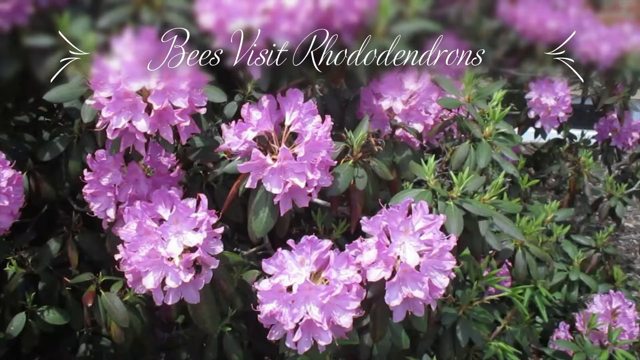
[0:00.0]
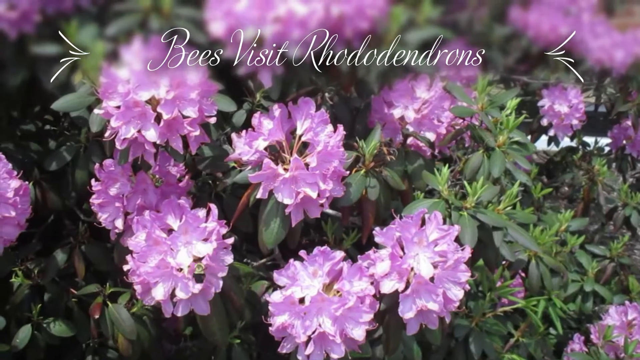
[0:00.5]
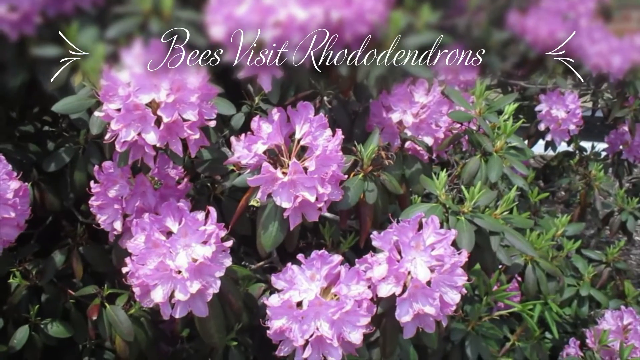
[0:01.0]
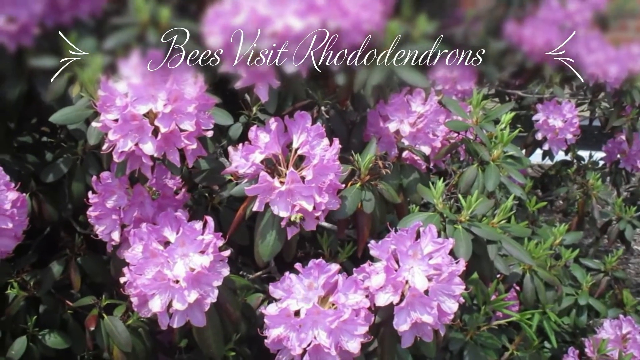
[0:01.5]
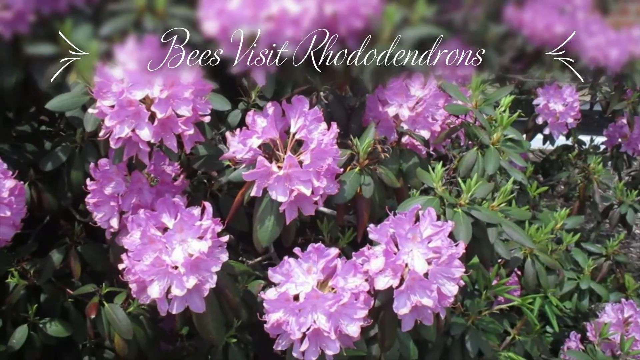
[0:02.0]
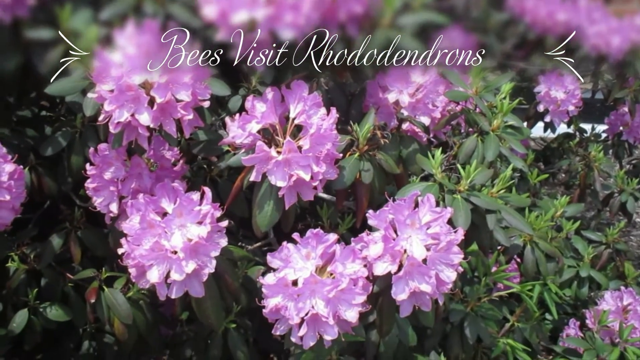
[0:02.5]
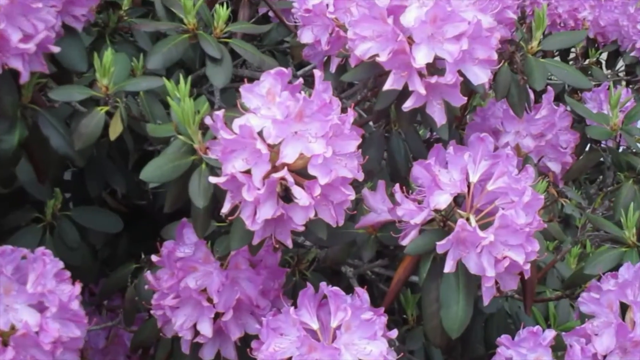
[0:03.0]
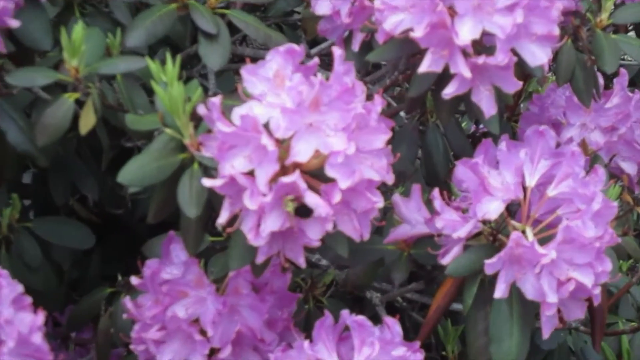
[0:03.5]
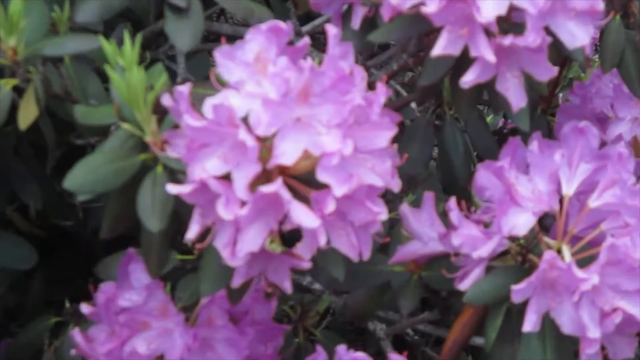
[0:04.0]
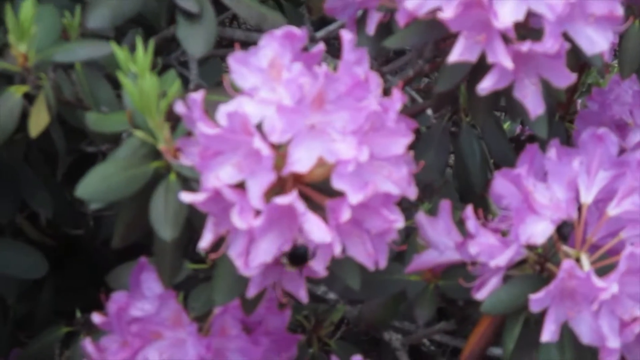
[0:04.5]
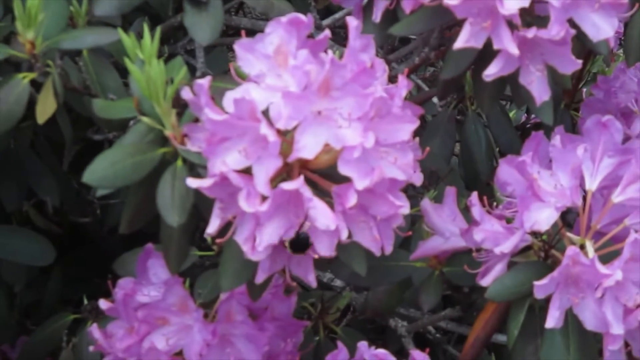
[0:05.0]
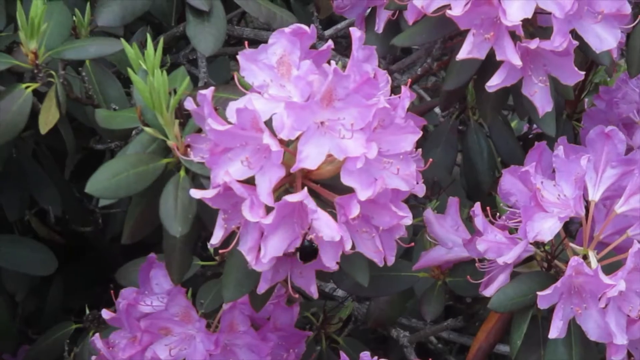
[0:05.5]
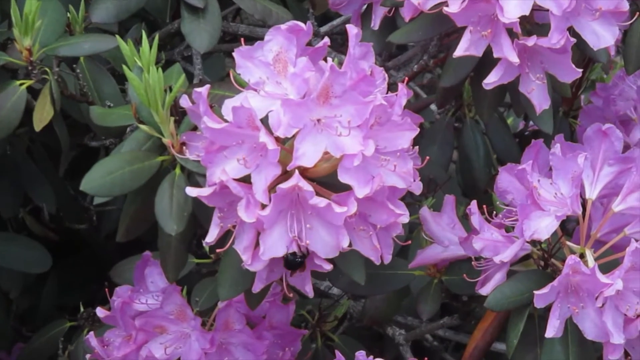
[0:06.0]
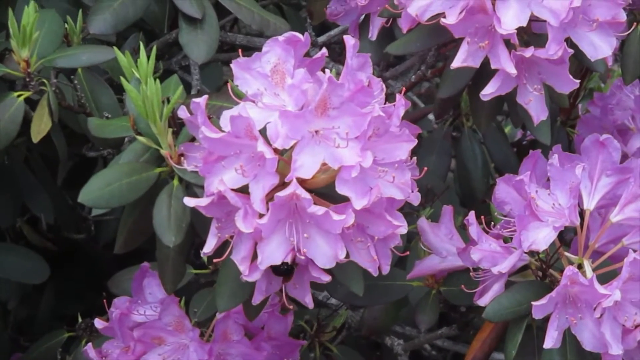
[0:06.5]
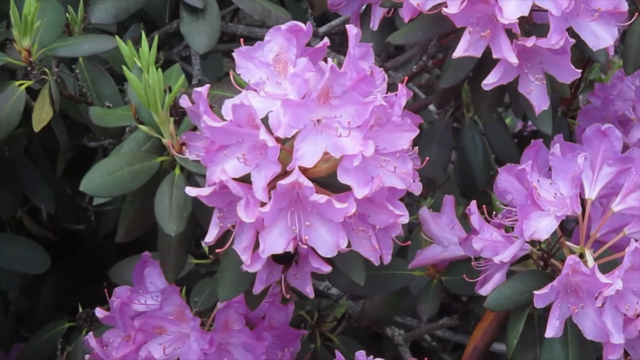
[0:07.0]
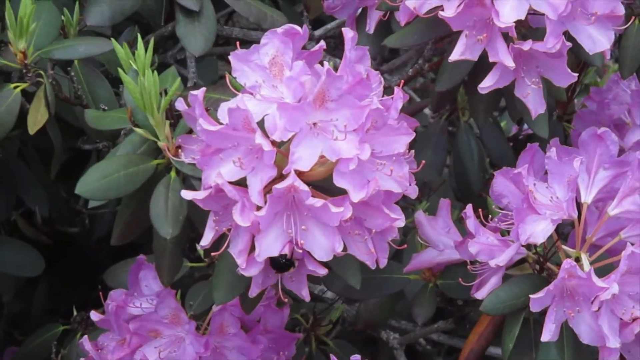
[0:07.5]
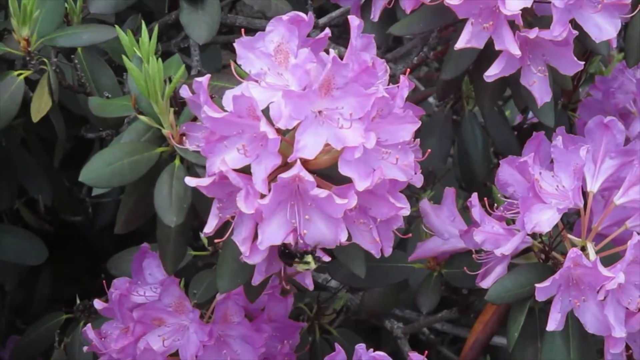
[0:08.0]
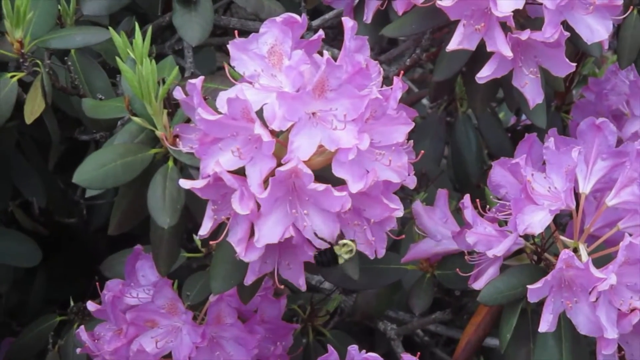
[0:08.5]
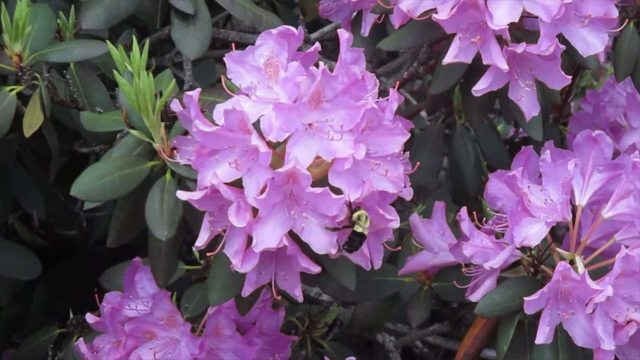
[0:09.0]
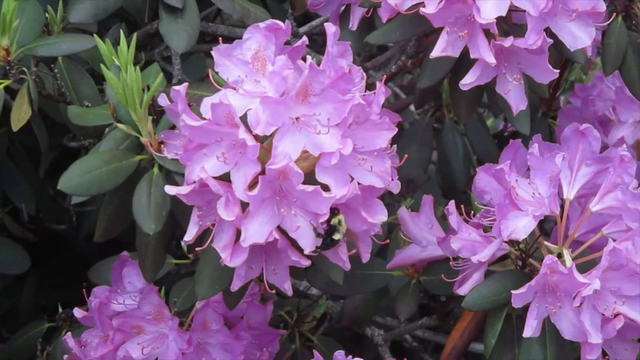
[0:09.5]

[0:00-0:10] The camera is zoomed in on some purple flowers, with bees visible at the center of some of them. A graphic at the top of the screen reads "Bees visit rhododendrons" in script, with decoration to the right and left of the text. The camera is handheld, and bees fly around. The opening establishing shot carries the title and shows about 10 flowers. The video then cuts to a closer shot zoomed in on a cluster of flowers, and finally zooms in and focuses on one purple flower, showing the detail of a bee crawling all around it.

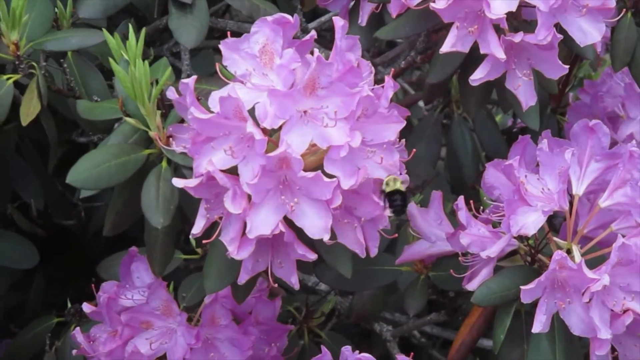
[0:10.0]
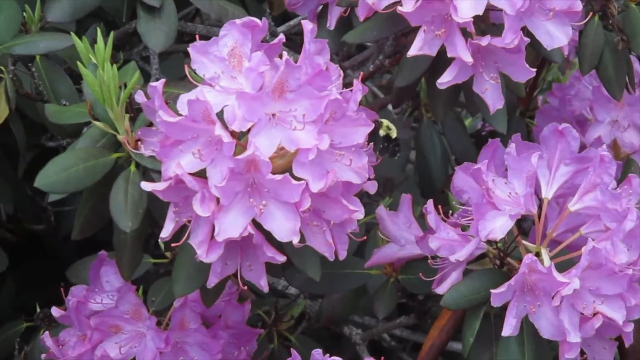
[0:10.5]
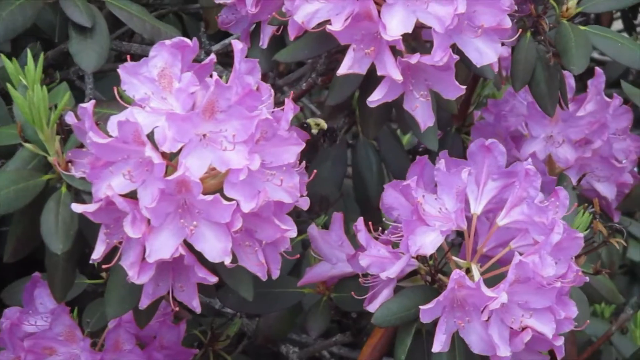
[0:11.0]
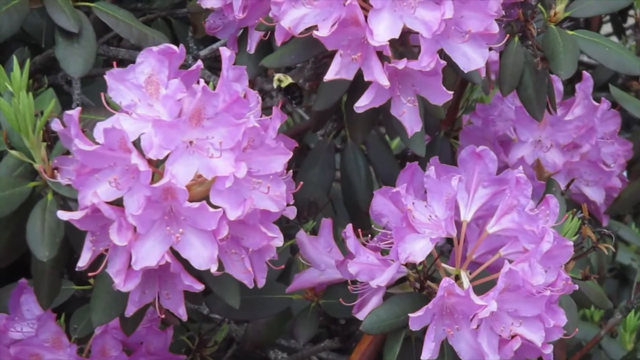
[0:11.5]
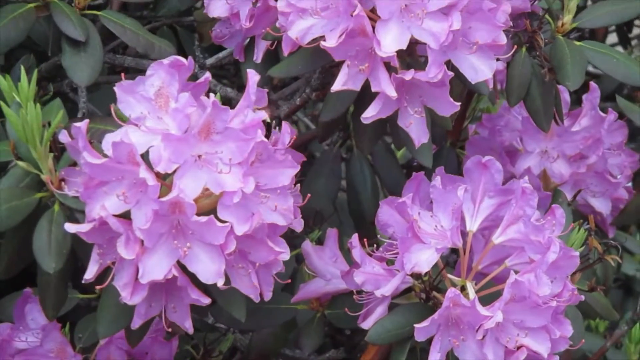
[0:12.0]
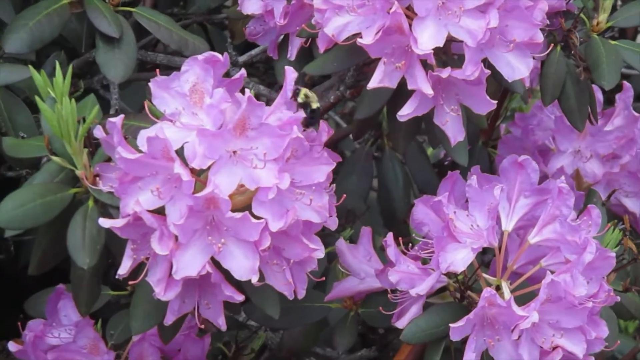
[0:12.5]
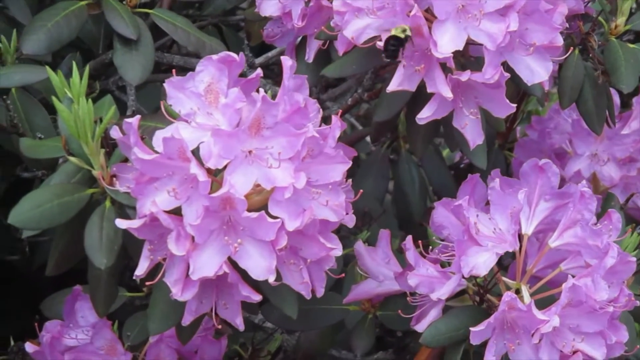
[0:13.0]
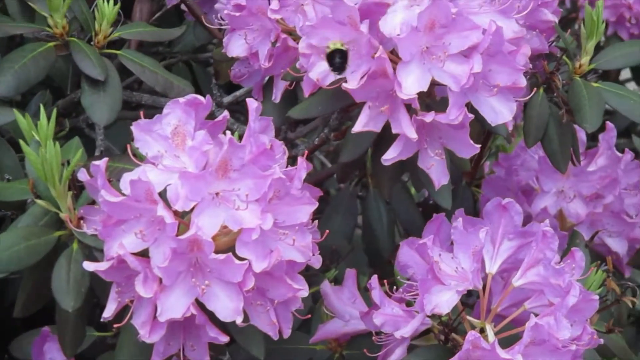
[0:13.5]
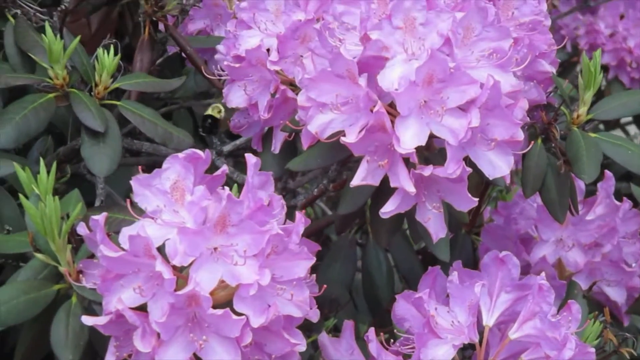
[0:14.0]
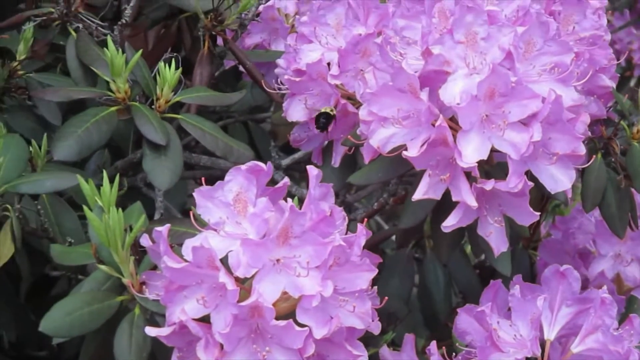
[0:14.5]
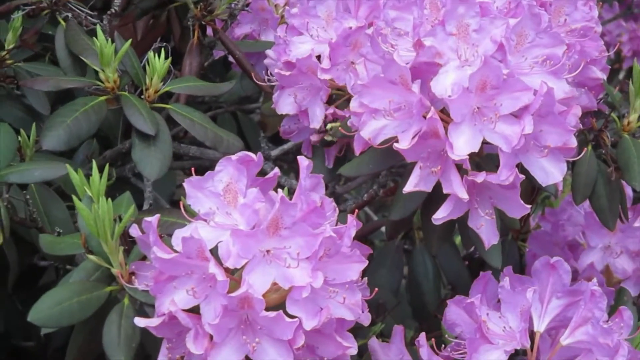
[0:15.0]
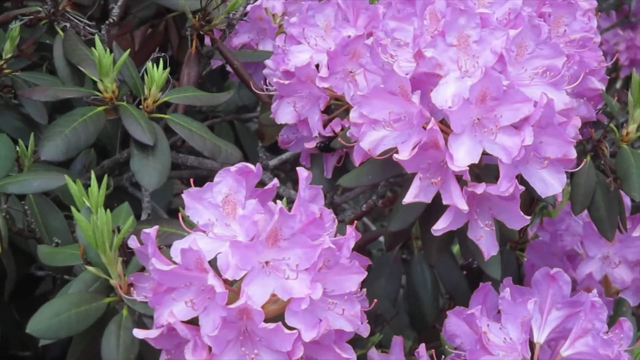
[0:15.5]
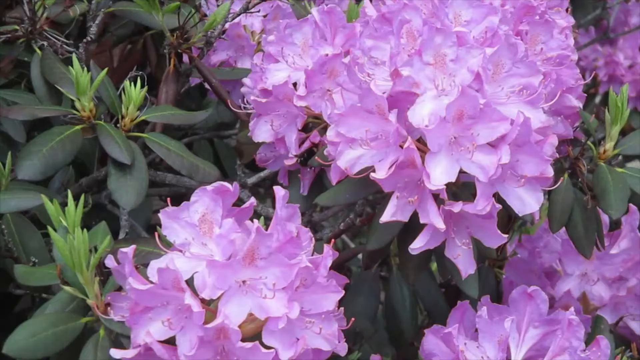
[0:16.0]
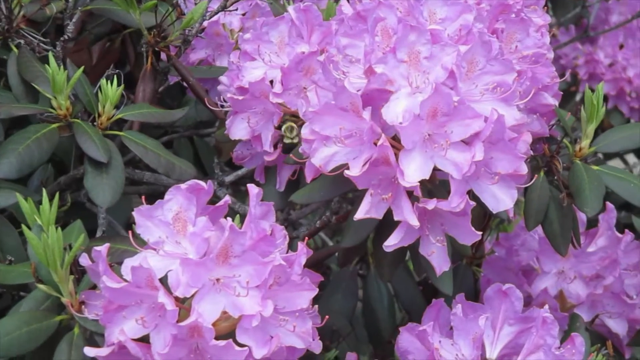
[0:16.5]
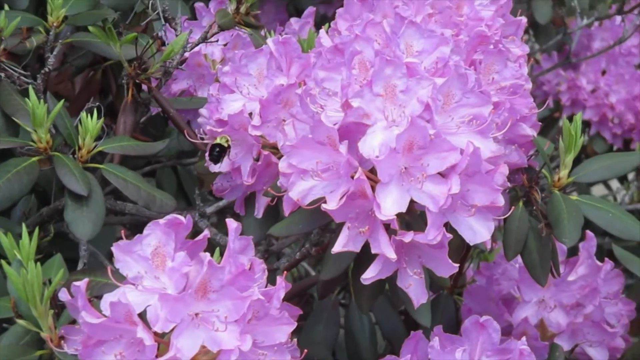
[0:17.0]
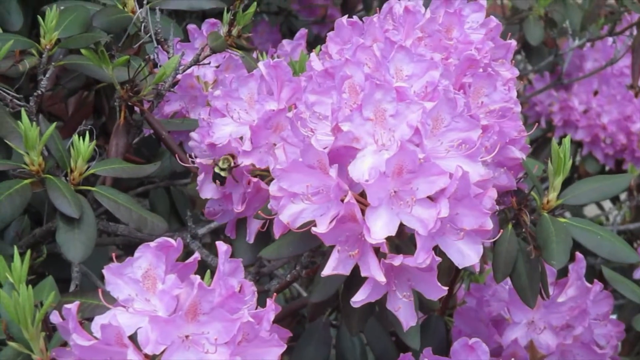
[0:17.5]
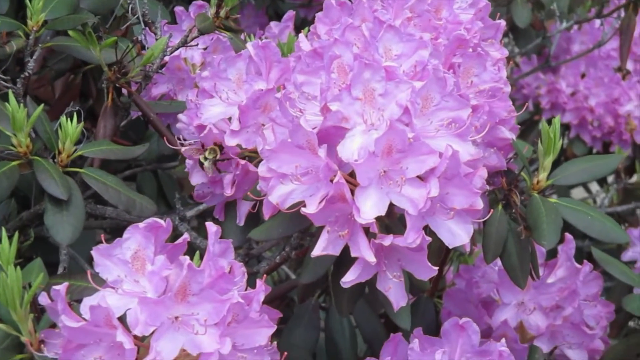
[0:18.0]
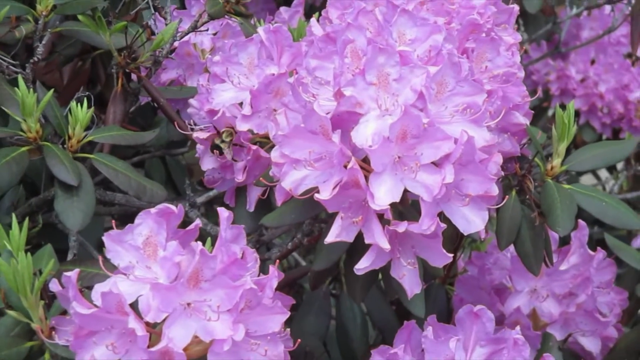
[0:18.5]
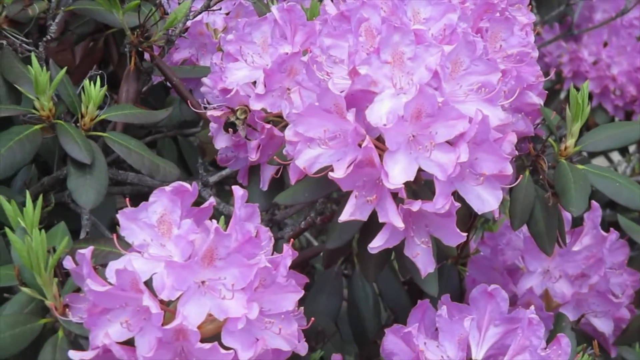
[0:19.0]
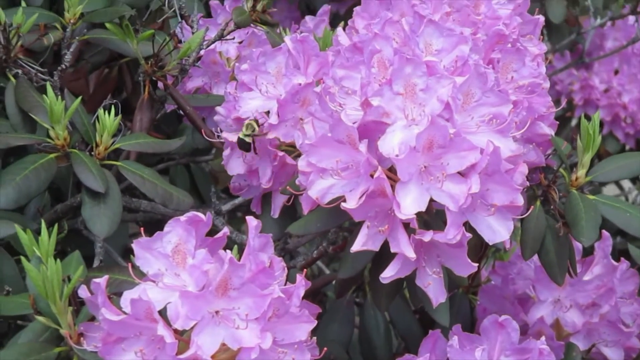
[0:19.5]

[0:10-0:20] The shot is zoomed in on one of the flowers, with parts of two other flowers on the right side of the frame. A bee flies around, and the camera moves with it as it hops from flower to flower, bringing a few more flowers into the frame. Each of these light purple rhododendrons is kind of a cluster of smaller flowers, with green leaves surrounding them; they seem to grow in a cluster of bushes and flowers. The bee moves very quickly, flying from flower to flower and often landing and crawling a little.